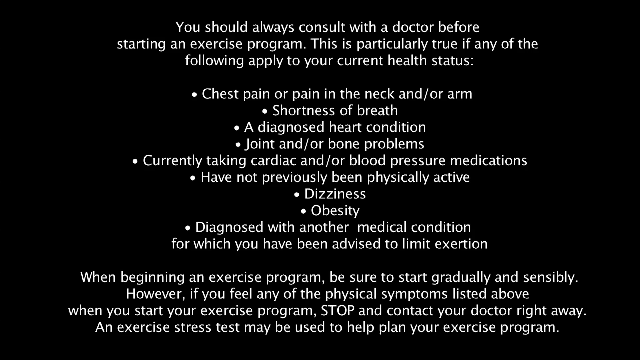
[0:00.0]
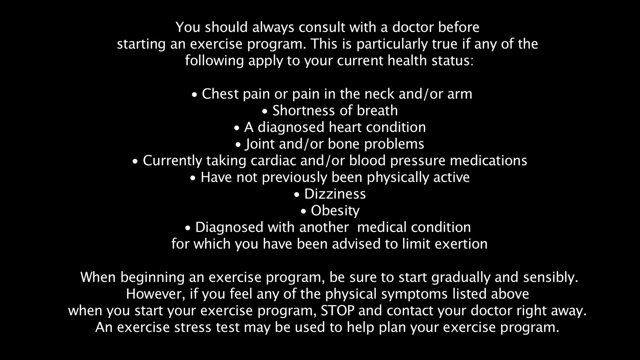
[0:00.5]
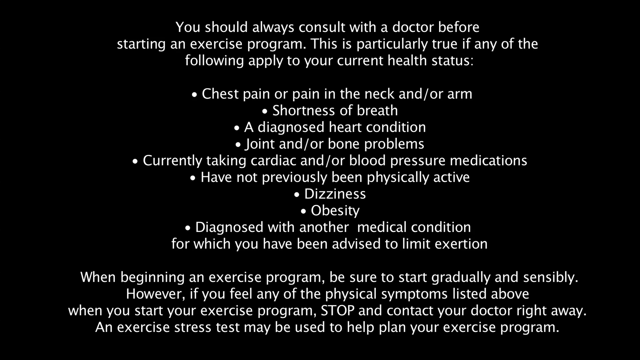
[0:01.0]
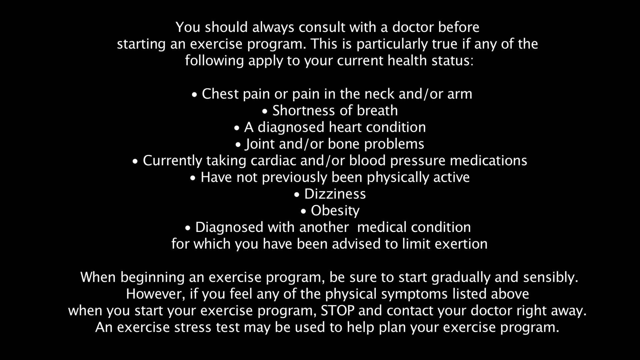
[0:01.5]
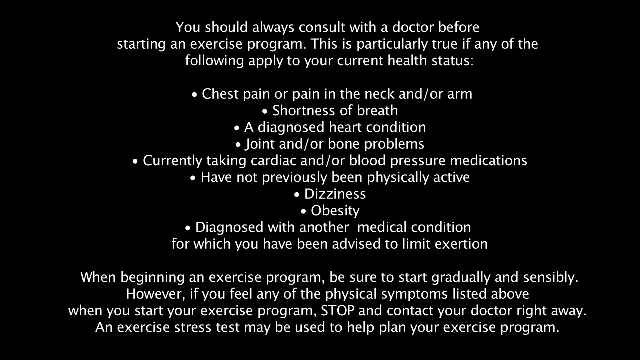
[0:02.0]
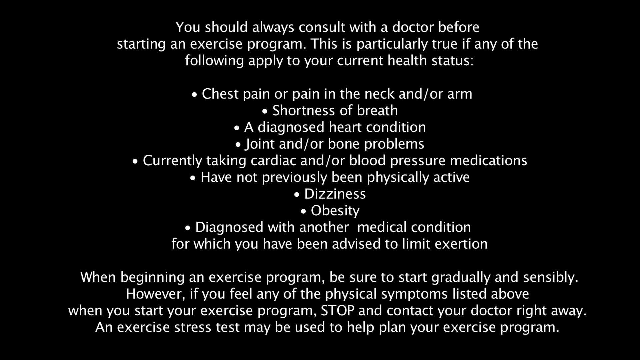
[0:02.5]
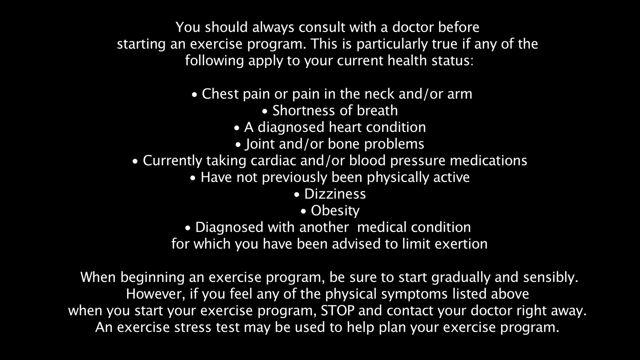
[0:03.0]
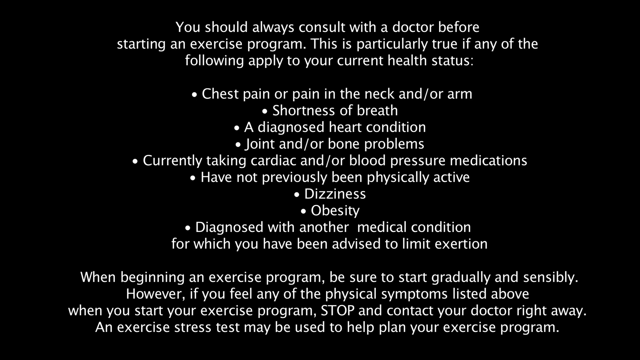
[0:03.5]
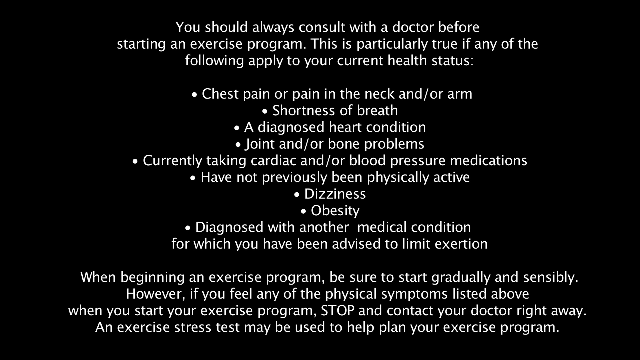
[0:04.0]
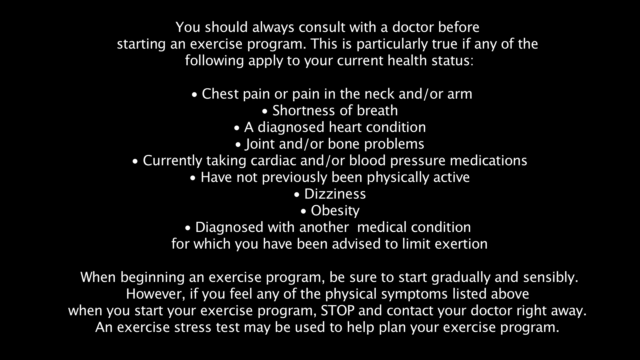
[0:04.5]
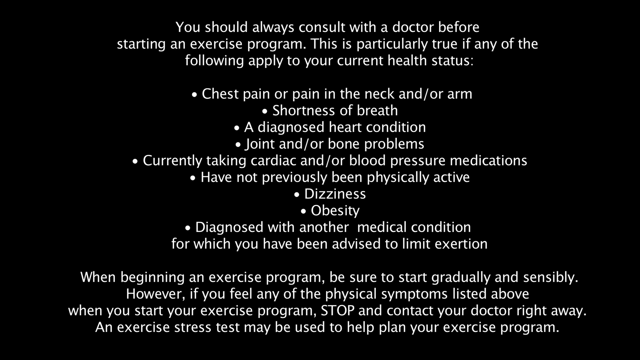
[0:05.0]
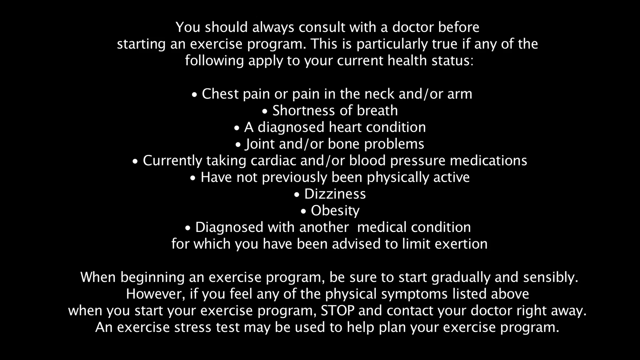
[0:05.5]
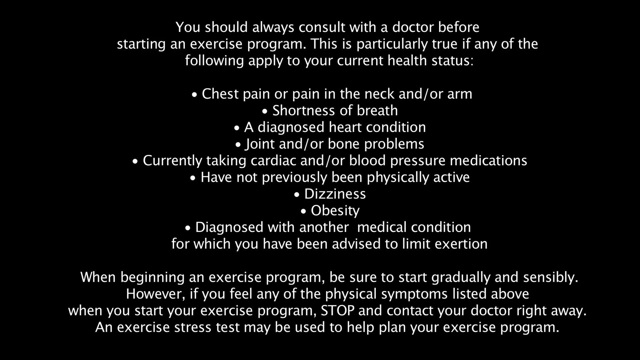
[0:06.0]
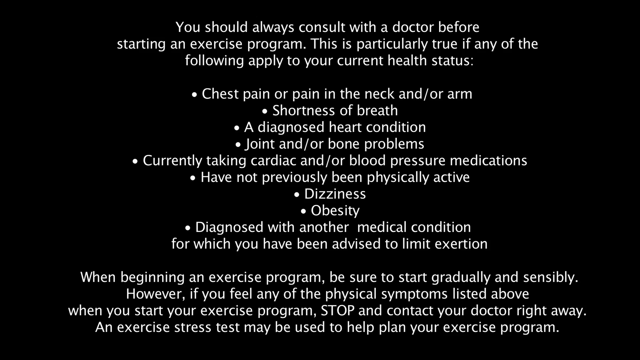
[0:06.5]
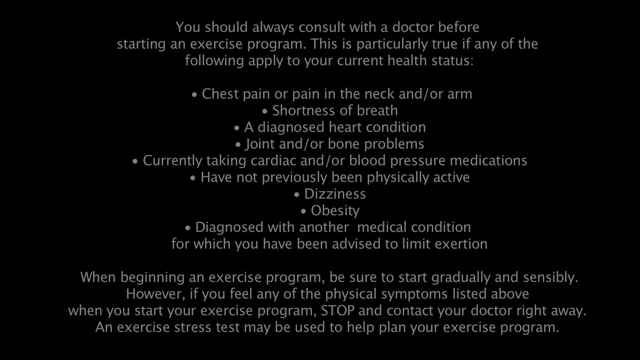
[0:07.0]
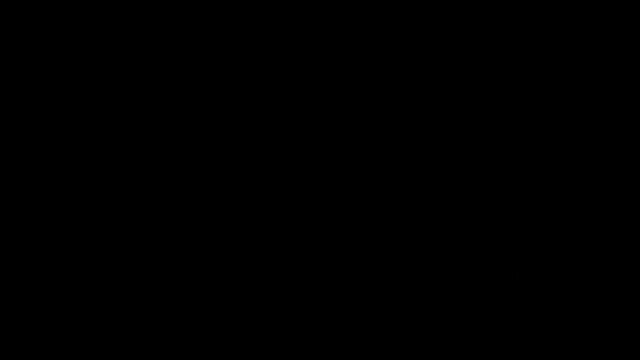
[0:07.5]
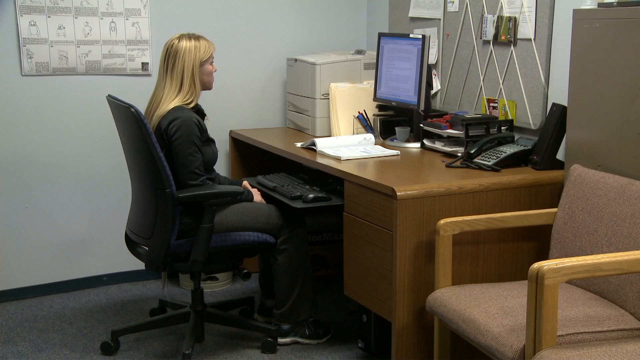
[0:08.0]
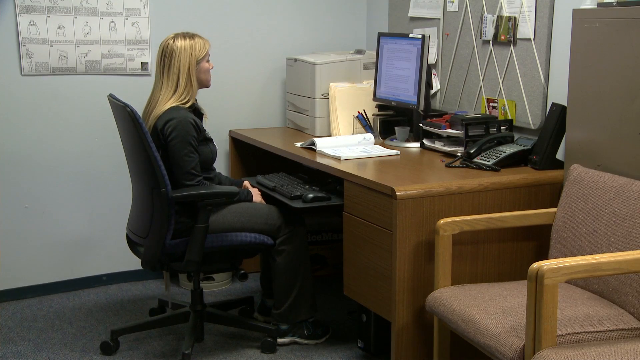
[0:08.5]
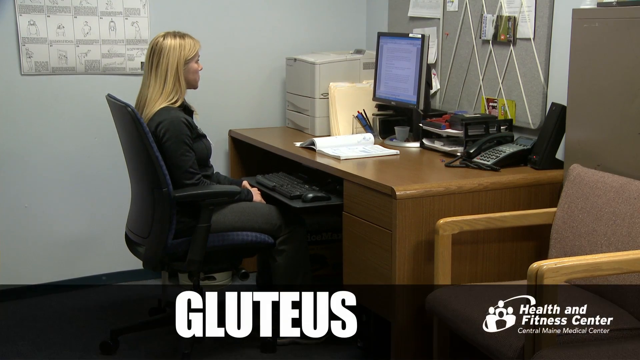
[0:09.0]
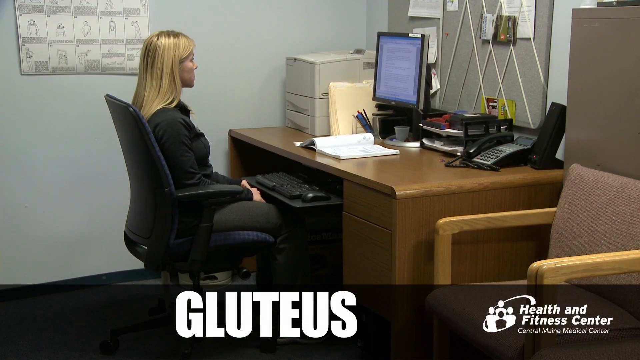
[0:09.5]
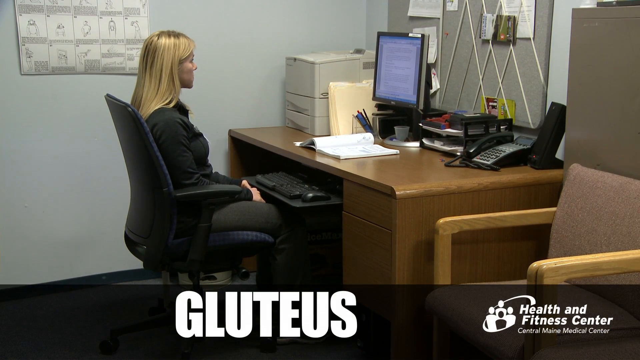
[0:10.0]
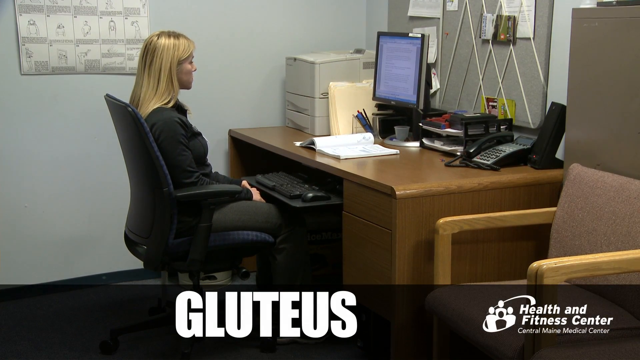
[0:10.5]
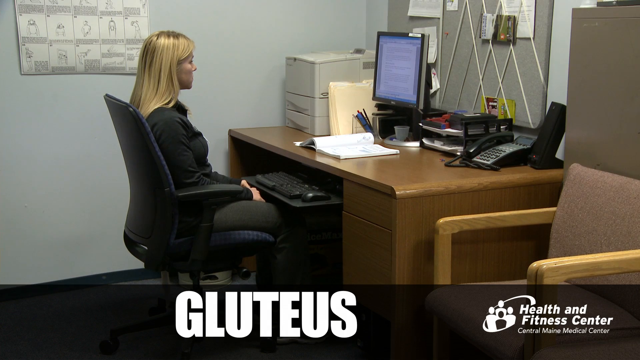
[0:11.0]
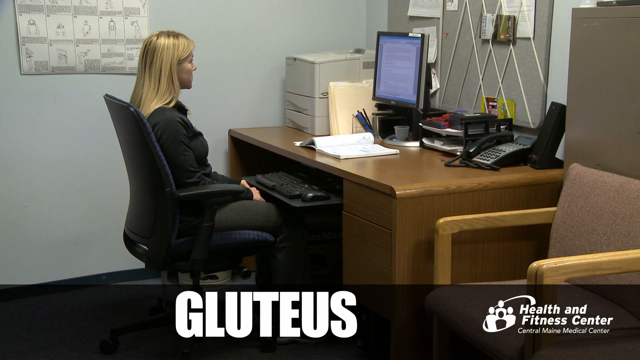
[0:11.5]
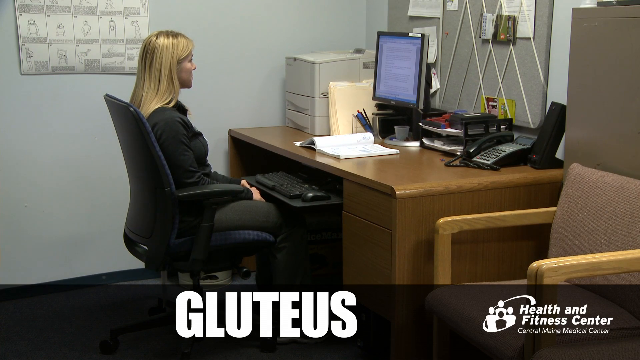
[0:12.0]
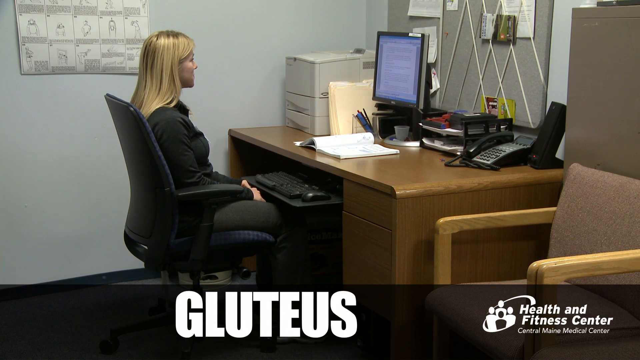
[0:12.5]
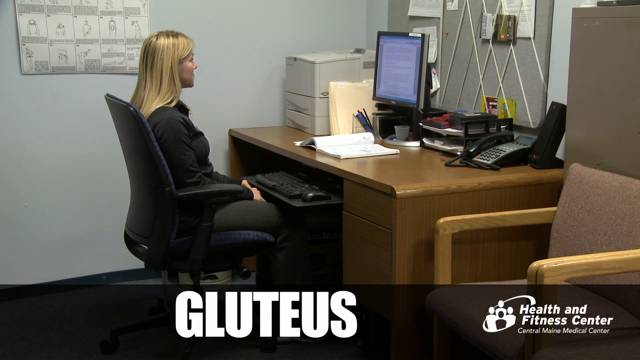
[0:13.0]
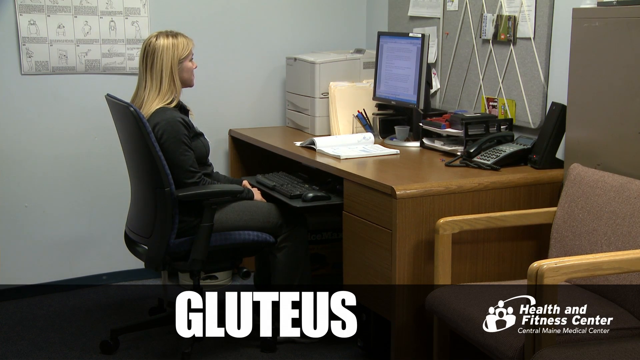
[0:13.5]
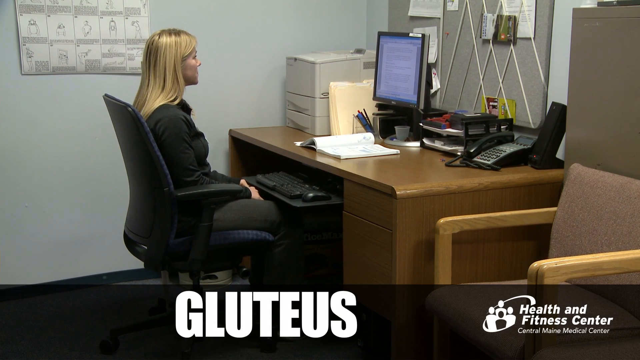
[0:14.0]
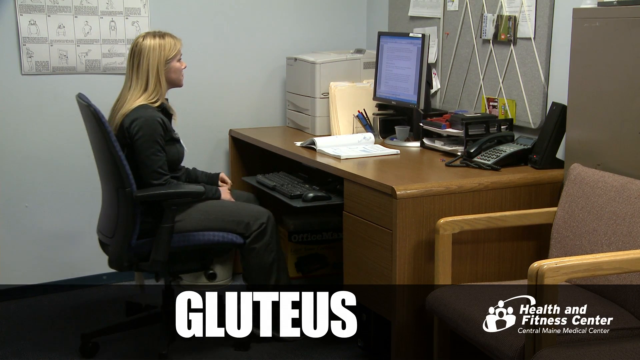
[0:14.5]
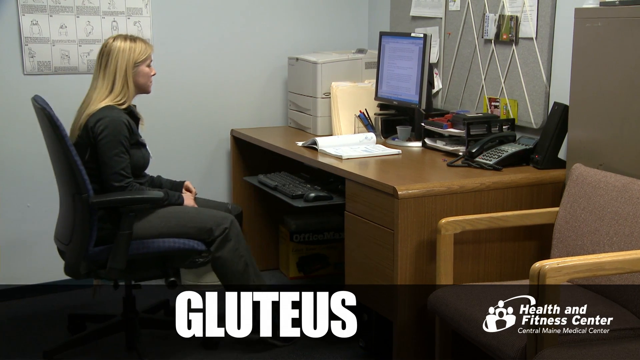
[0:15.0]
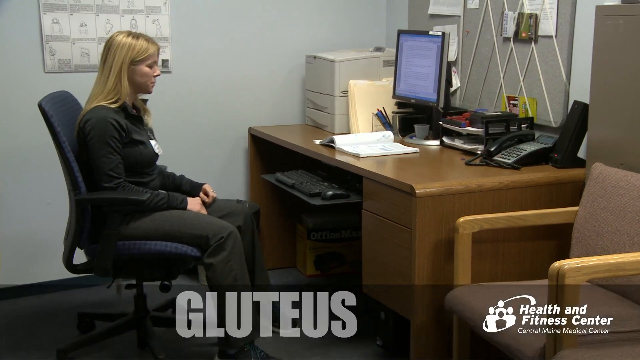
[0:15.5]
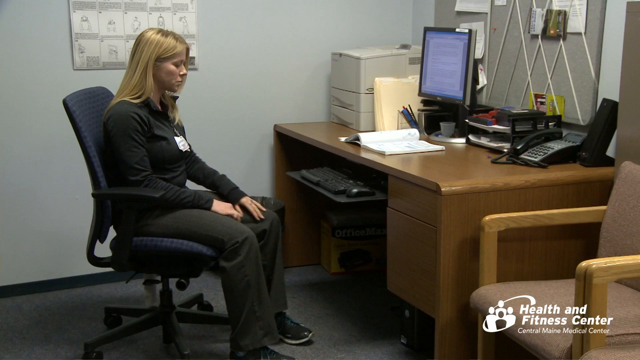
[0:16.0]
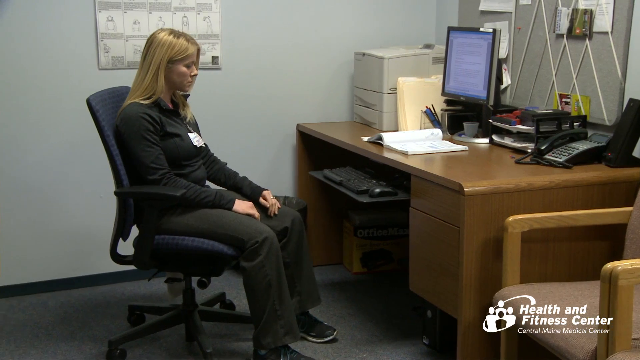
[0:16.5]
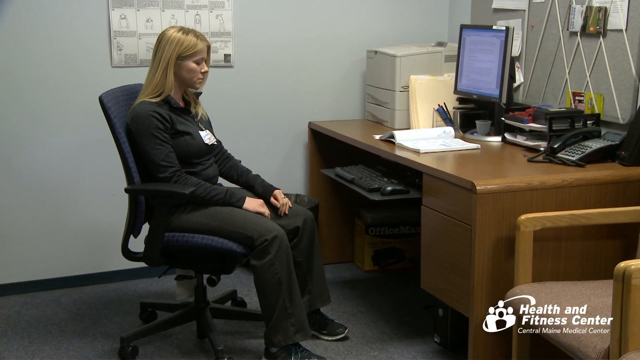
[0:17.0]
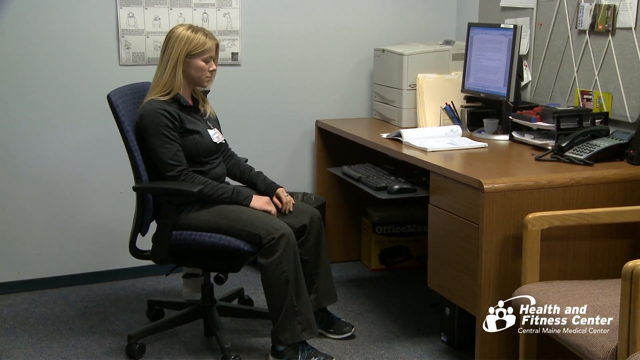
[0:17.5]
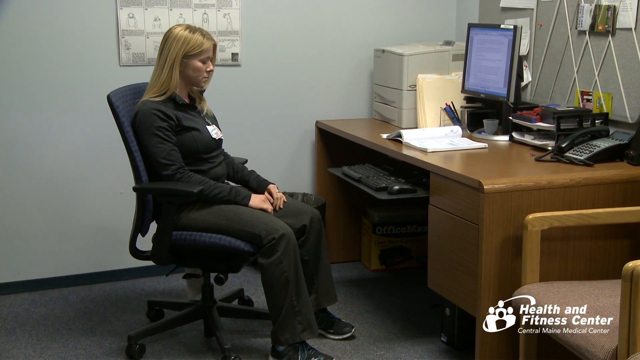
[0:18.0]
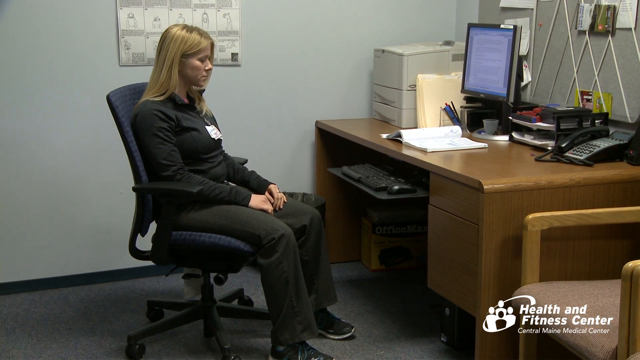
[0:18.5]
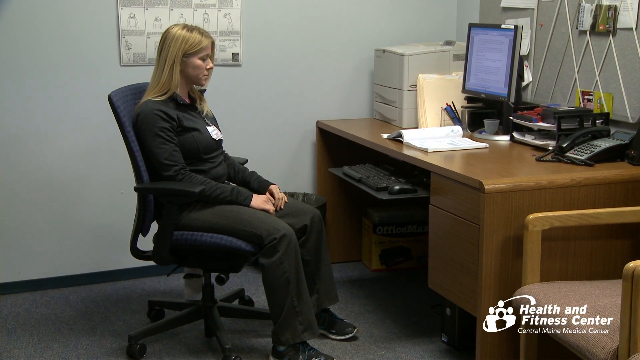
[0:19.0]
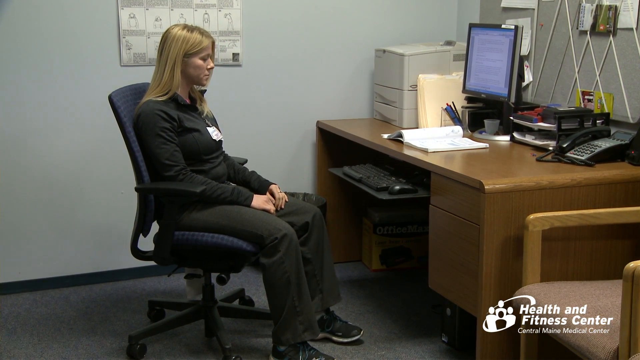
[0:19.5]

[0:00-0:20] The video starts with warning text in white on black, reading: "You should always consult with a doctor before starting an exercise program. This is particularly true if any of the following apply to your current health status. Chest pain or pain in the neck and or arm, shortness of breath, a diagnosed heart condition, joint and or bone problems, currently taking cardiac and or blood pressure medications, have not previously been physically active, dizziness, obesity, diagnosed with another medical condition for which you have advised to limit exertion. When beginning an exercise program, be sure to start gradually and sensibly, however if you feel any of the physical symptoms listed above when you start your exercise program, STOP and contact your doctor right away. An exercise stress test may be used to help plan your exercise program." The text fades to a scene of a young white woman with blonde hair sitting in a swivel chair at a desk in an office. On the desk are a printer, a computer monitor, an in-tray, a phone and an open book. On the wall behind the desk is a pinboard, and a brown chair with wooden arms is in the foreground on the right. A caption banner at the bottom of the frame reads "GLUTEUS. Health and fitness centre".